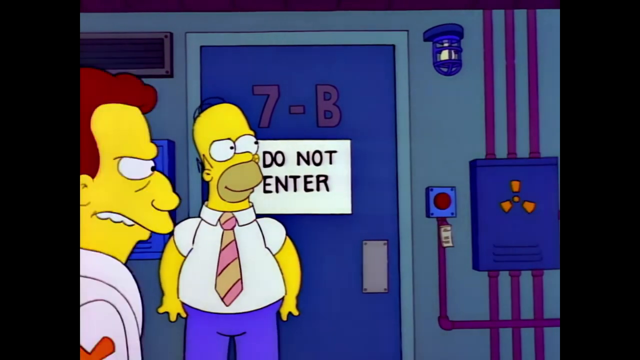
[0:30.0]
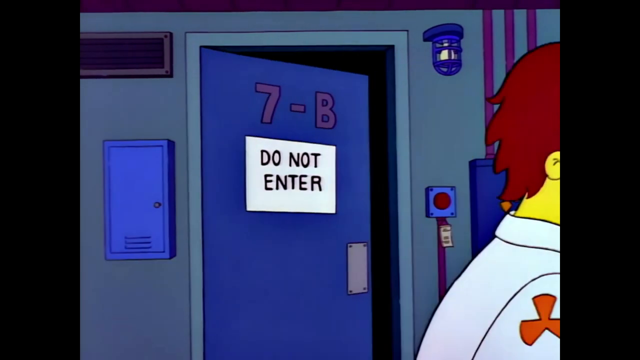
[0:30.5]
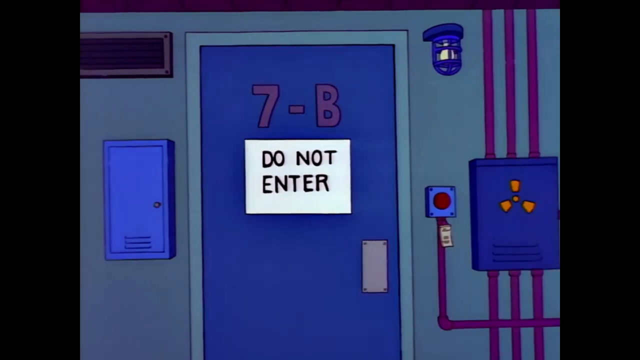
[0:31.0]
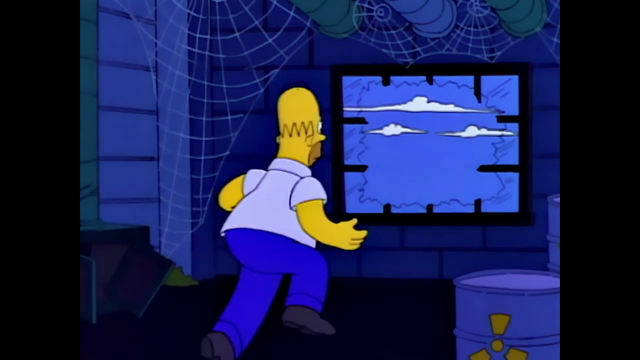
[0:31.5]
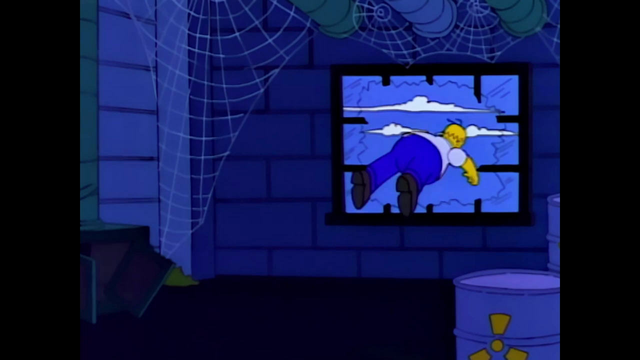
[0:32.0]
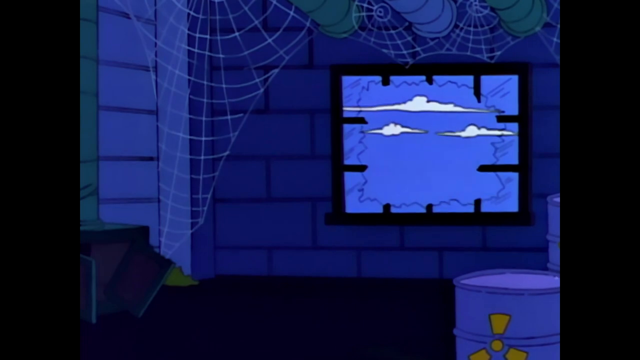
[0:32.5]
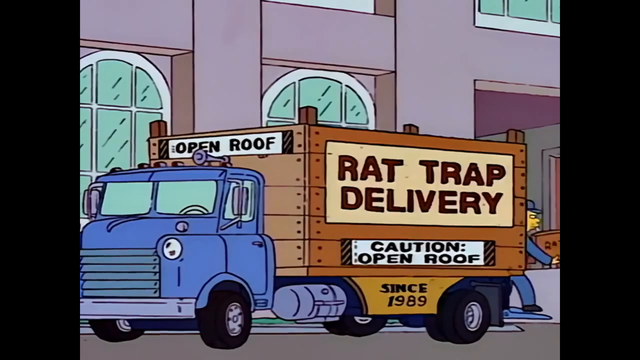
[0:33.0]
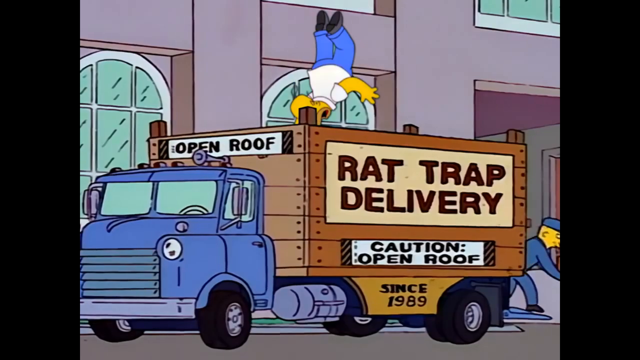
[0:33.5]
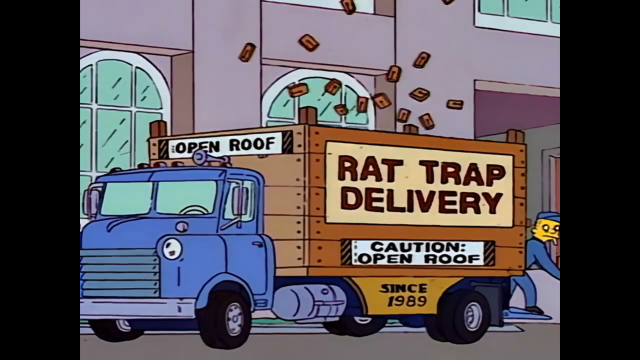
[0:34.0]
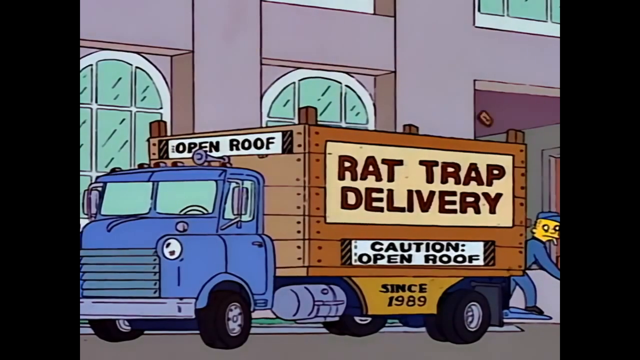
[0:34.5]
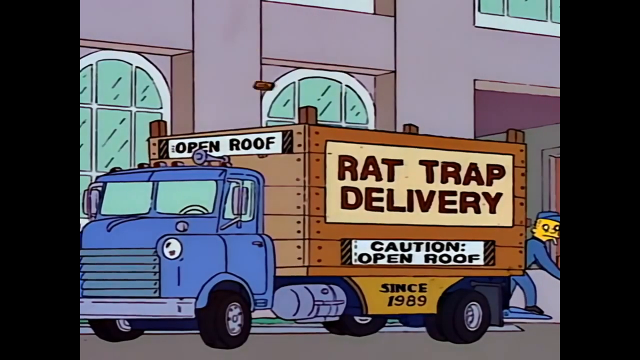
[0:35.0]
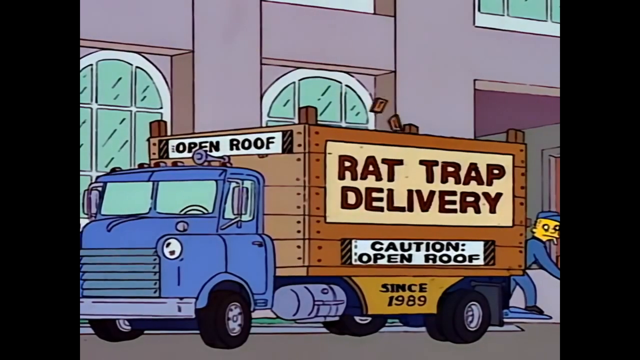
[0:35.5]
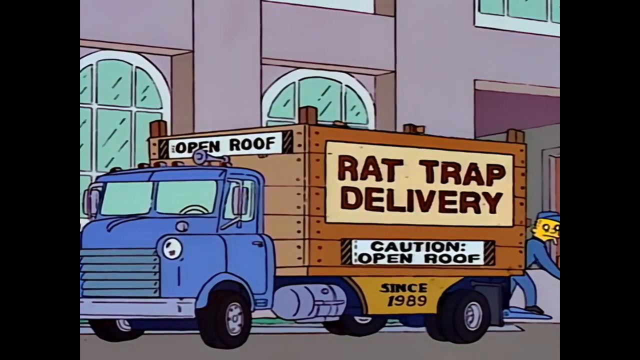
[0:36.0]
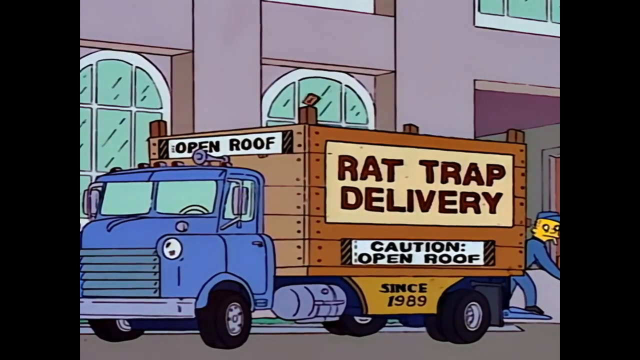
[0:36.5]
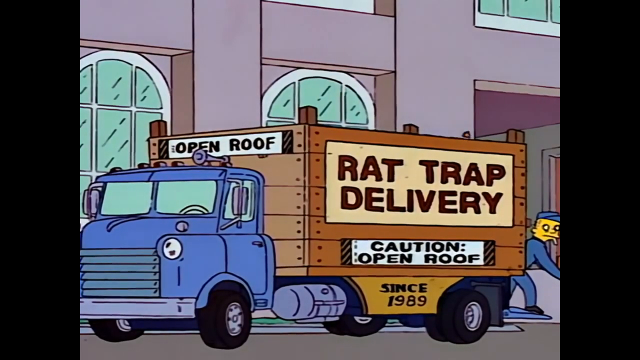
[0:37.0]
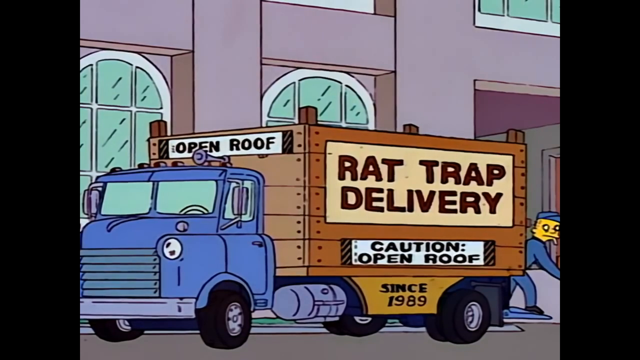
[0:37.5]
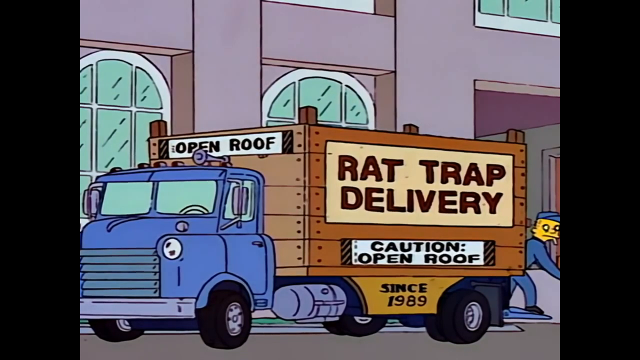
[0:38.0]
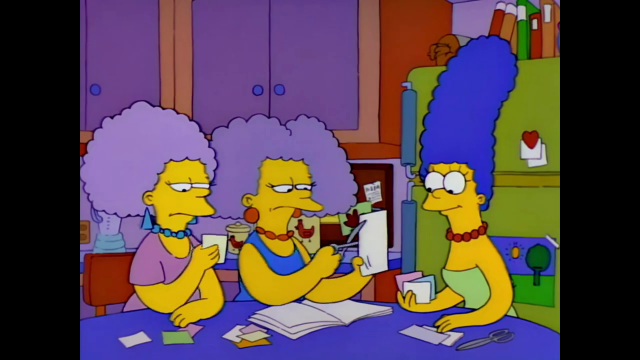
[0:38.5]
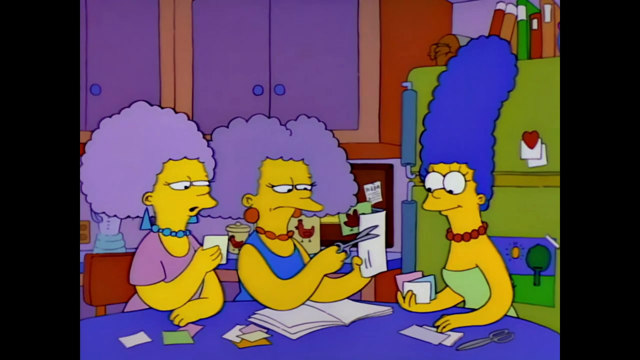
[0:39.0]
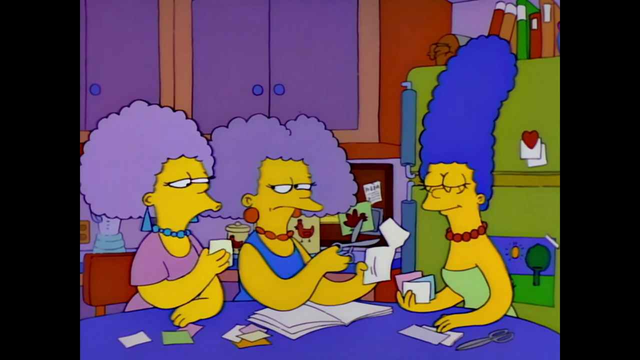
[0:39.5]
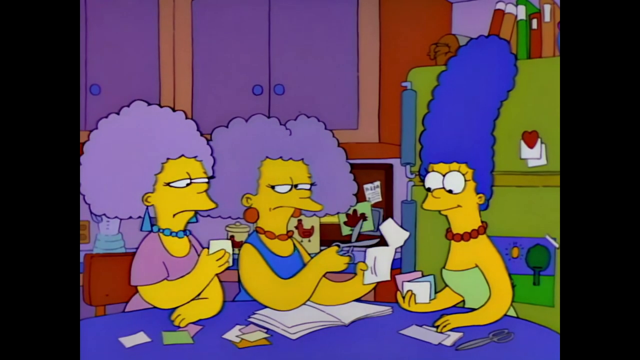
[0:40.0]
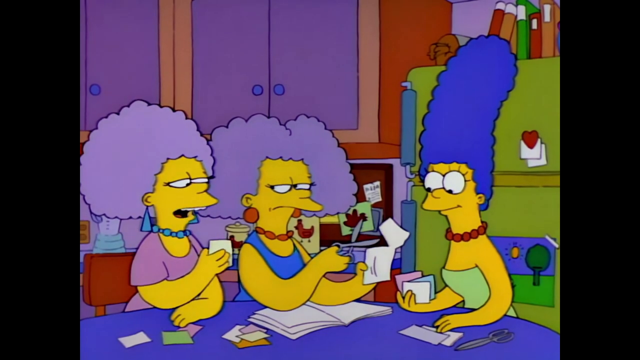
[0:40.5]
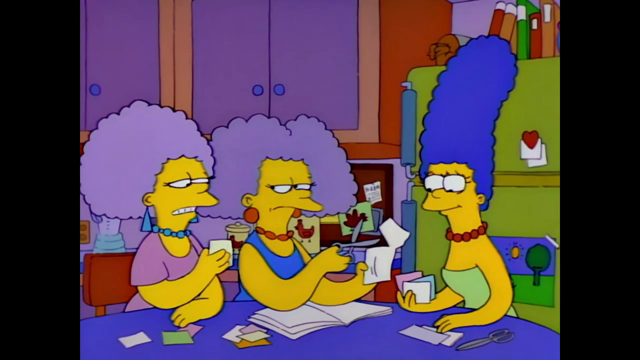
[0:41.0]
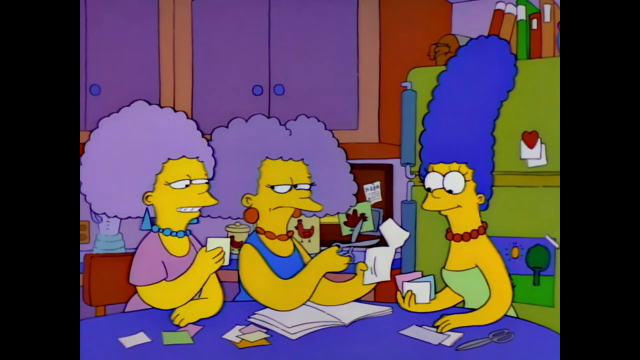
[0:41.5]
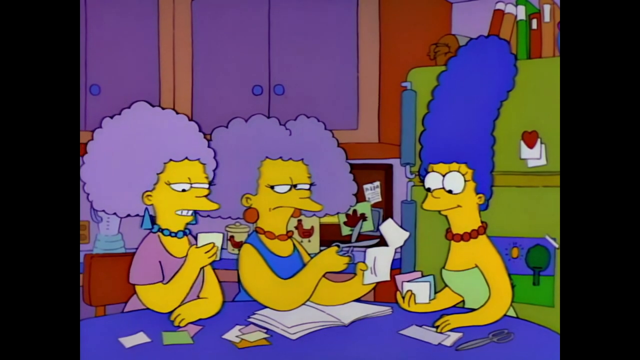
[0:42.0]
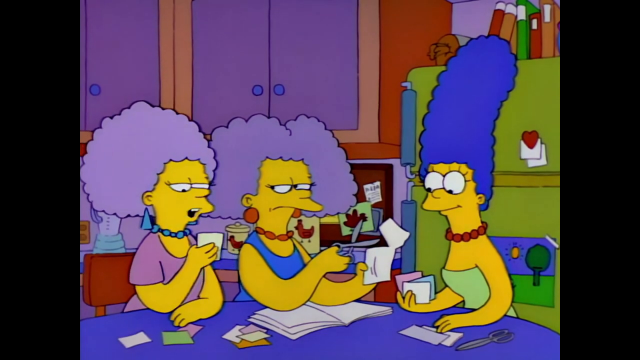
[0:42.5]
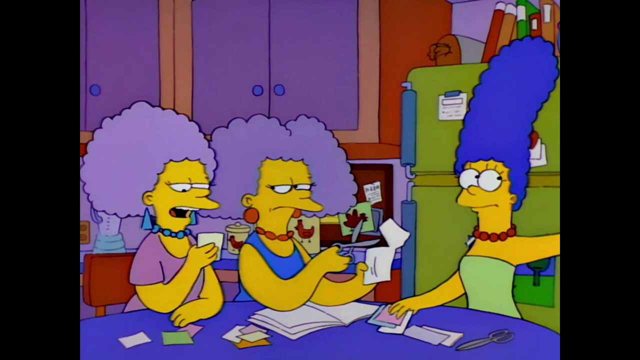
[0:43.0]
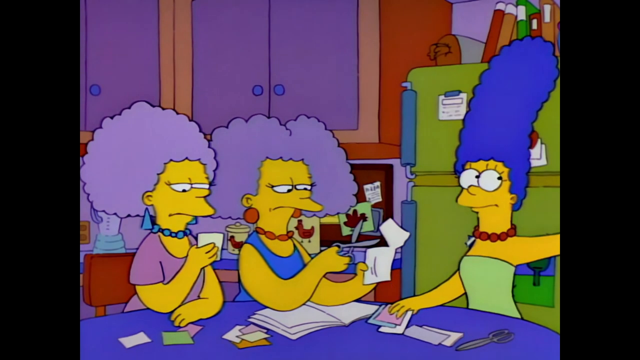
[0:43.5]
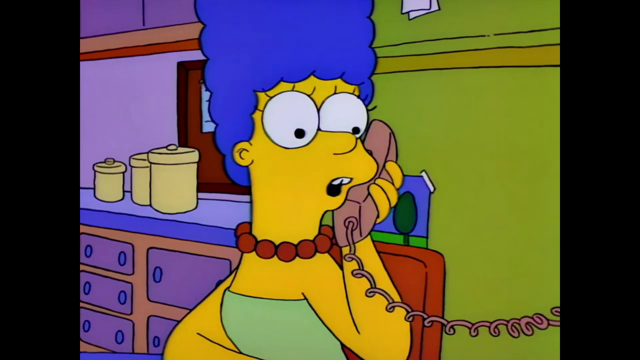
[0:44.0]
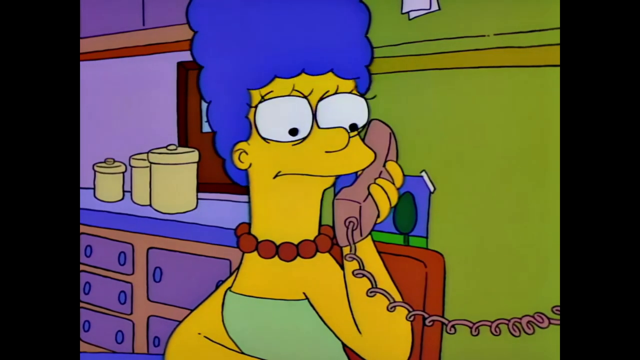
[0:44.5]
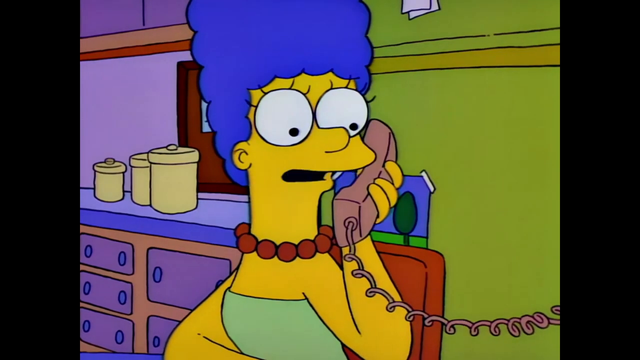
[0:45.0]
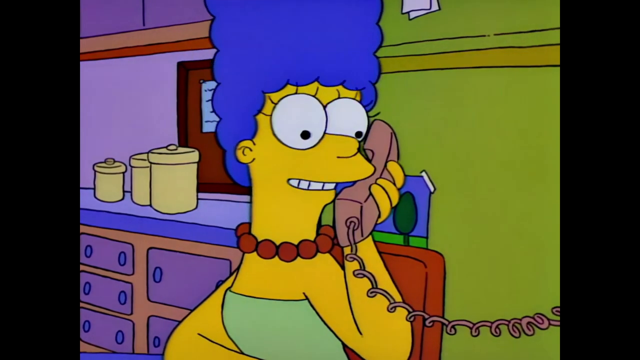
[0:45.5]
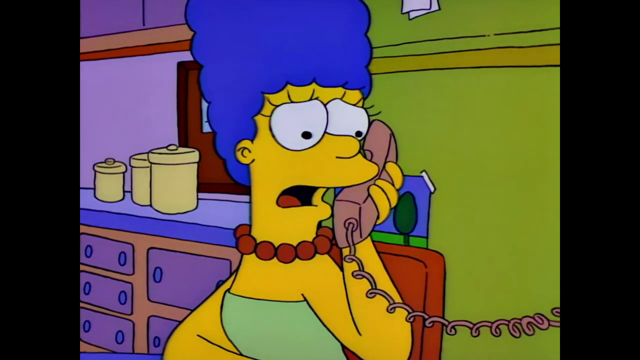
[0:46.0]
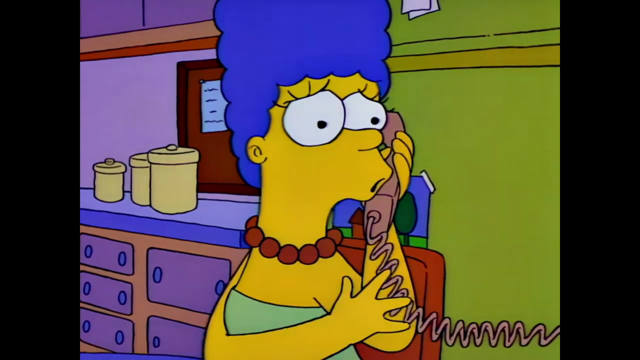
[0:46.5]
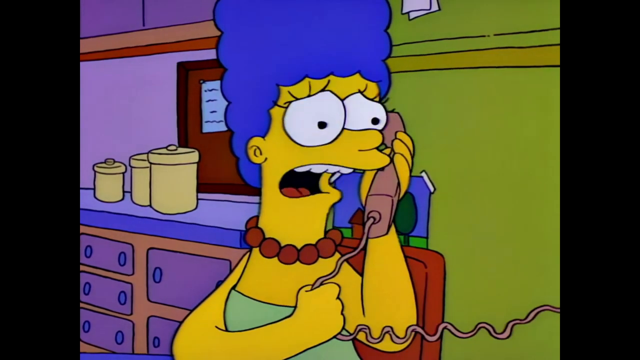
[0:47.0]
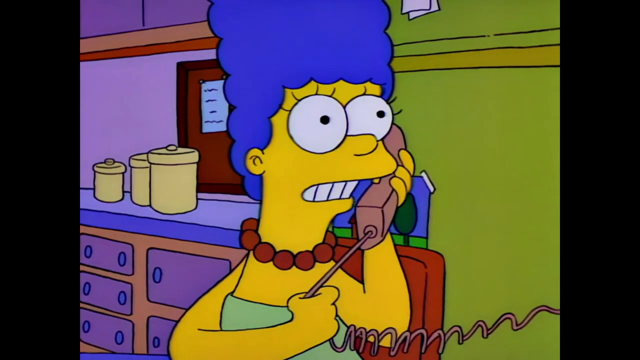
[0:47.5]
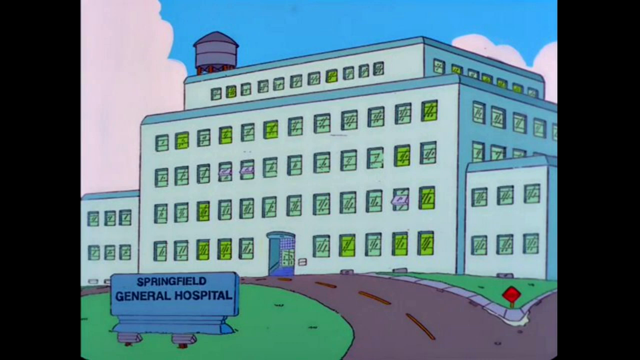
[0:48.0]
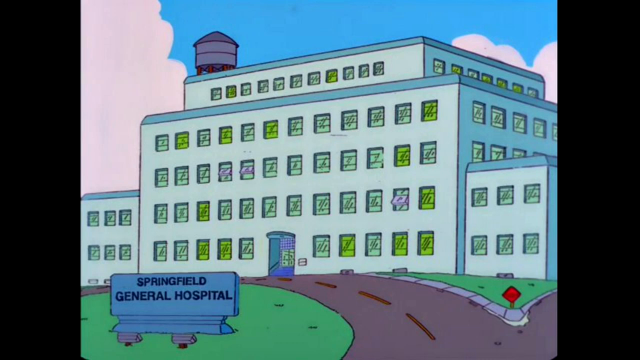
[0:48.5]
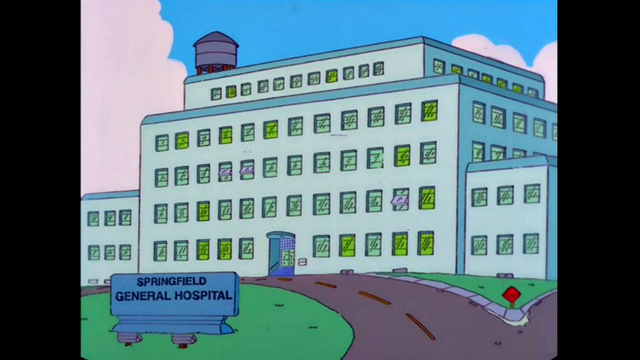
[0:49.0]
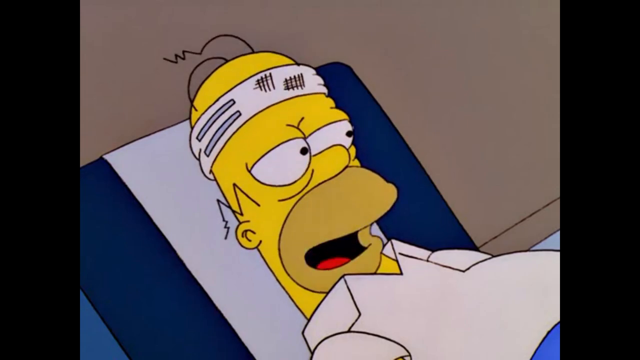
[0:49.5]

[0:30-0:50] Homer leans against the wall, looking at the door curiously. He opens the door and enters as a man walks by going to the right; there is a mad look on his face. The room looks like the inside of a castle, with what almost seem to be cobwebs hanging from the ceiling. Homer runs in from the bottom left toward a window on the right that is already busted out, takes off running and jumps through the hole. The scene cuts to a truck facing left, carrying a big wooden box. On the left of the box it says "open roof"; on the right side it says "rat trap delivery", below that "caution", and "open roof" below that, and on the side of the truck "since 1989". A man walks from behind the truck on the right side. Homer comes crashing down into it, and rat traps bounce up in the air as he falls in. The scene cuts to two women with purple hair who look just alike, one in a pink dress on the left and one in a blue dress on the right, who is Marge. They are in a kitchen looking at some papers, cutting coupons or papers, as they talk. Marge answers the phone, puts it to her ear, looks worried and grabs the cord. A wide shot shows Springfield Hospital, a big, tall building with a little blue sky and clouds on the left and right, a road coming in from the right, and a Springfield General Hospital sign at the bottom left. Inside, Homer lies on a bed with a white wrap around his head and a white shirt, looking over to the right with kind of drowsy eyes and his mouth open.